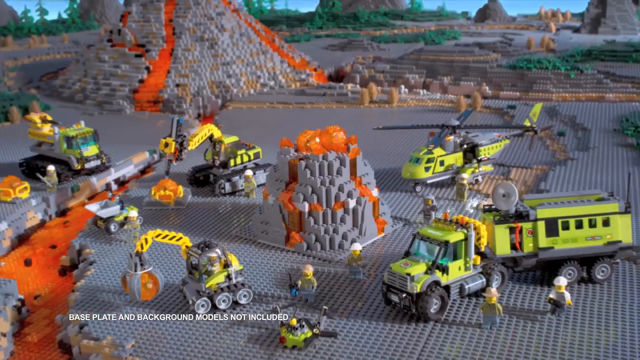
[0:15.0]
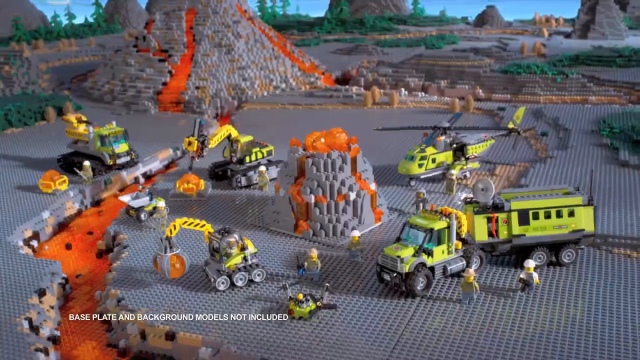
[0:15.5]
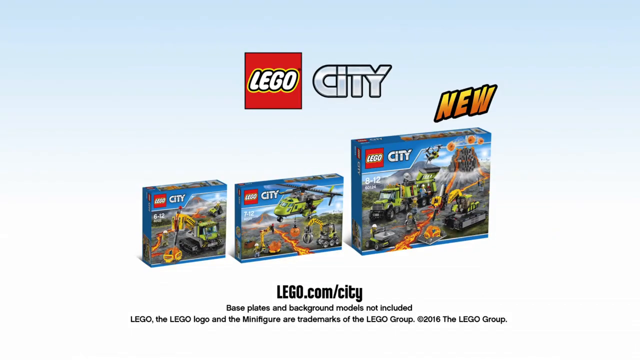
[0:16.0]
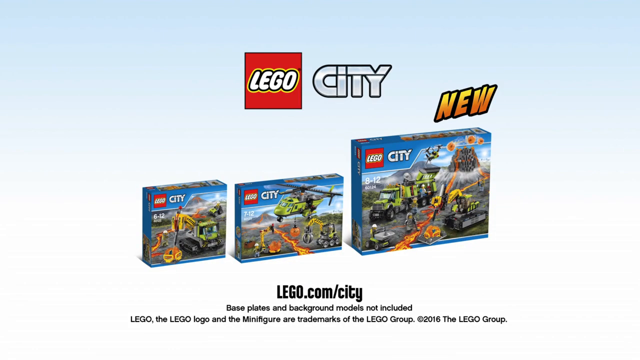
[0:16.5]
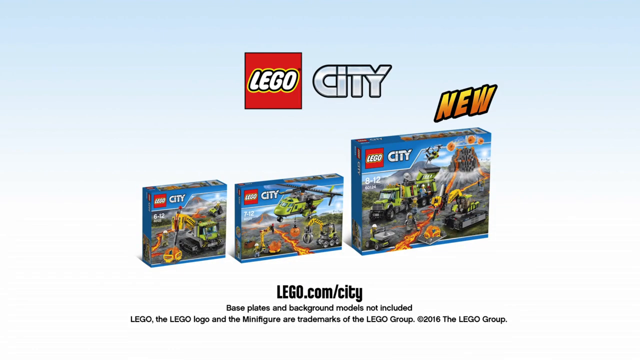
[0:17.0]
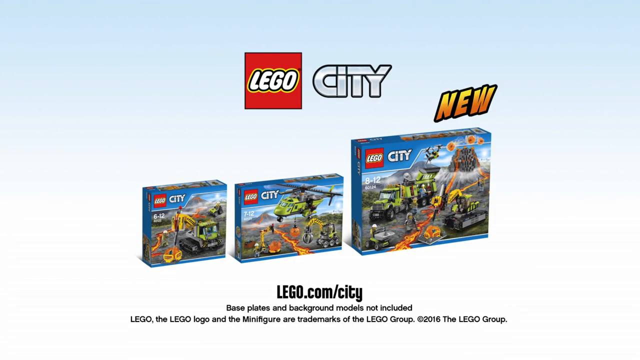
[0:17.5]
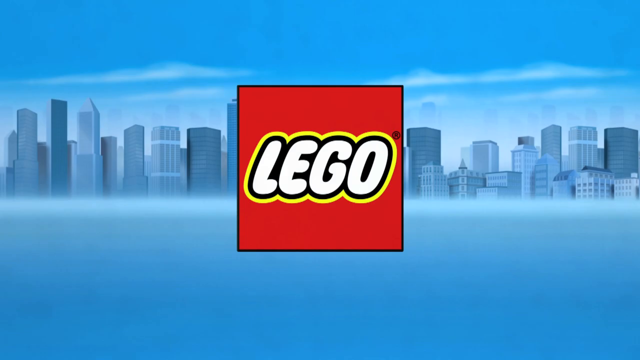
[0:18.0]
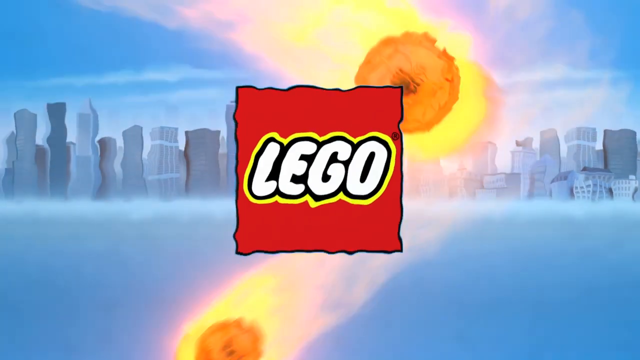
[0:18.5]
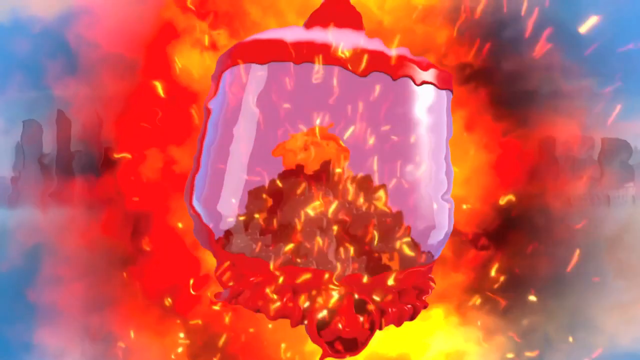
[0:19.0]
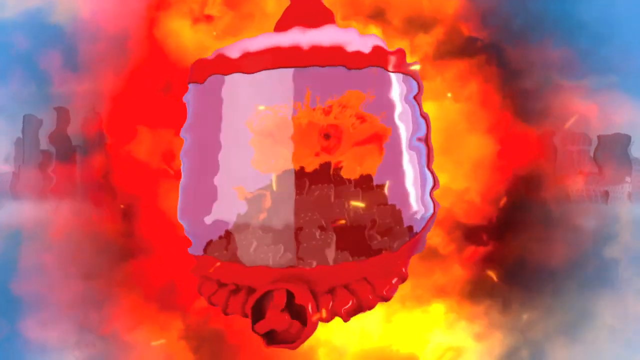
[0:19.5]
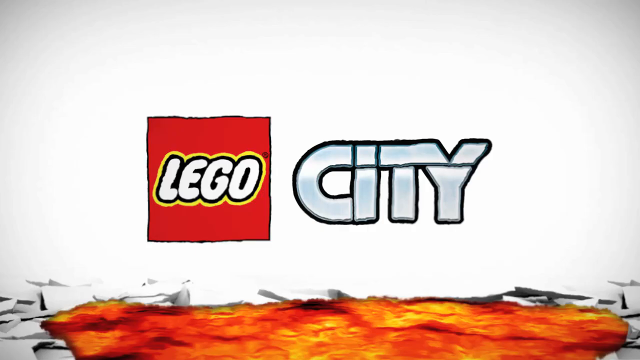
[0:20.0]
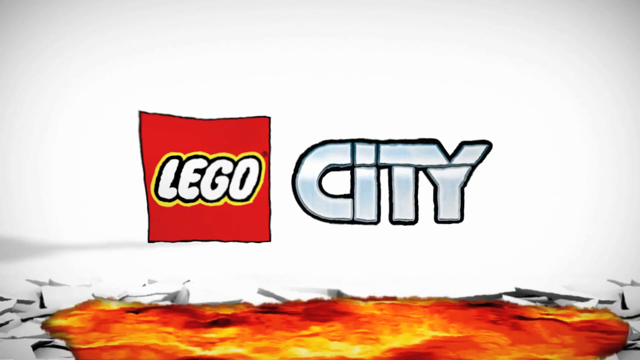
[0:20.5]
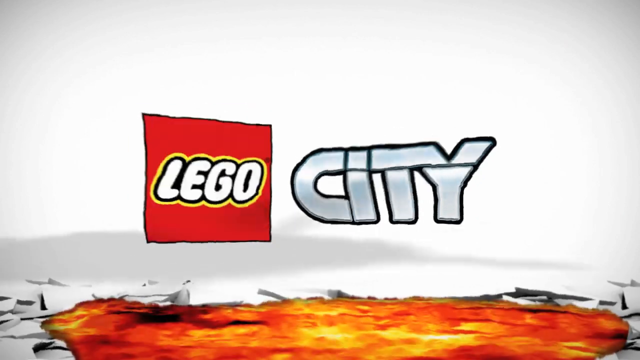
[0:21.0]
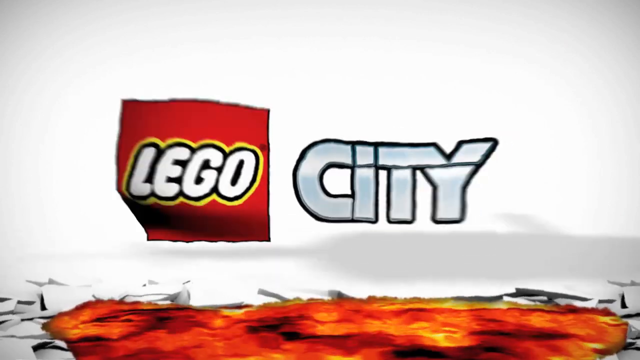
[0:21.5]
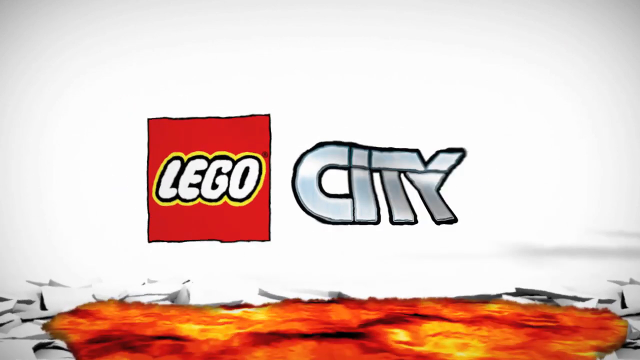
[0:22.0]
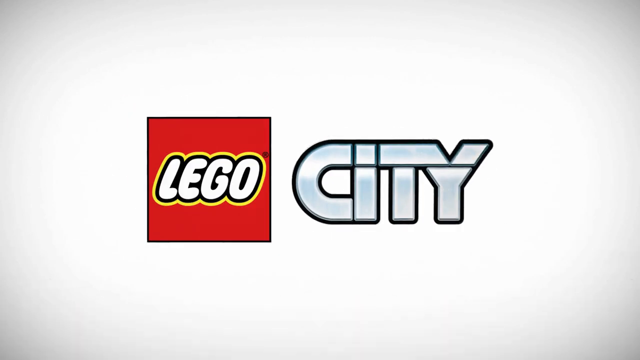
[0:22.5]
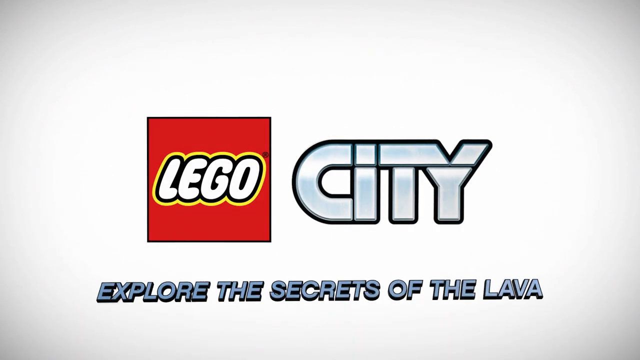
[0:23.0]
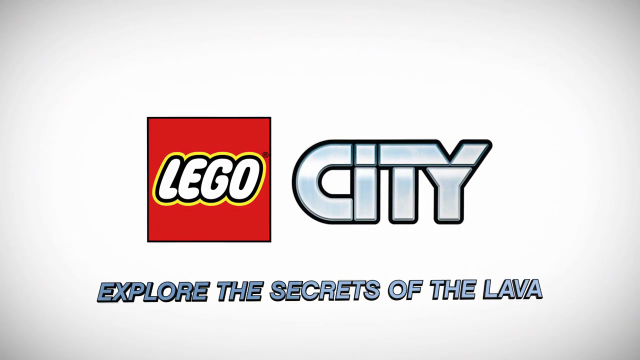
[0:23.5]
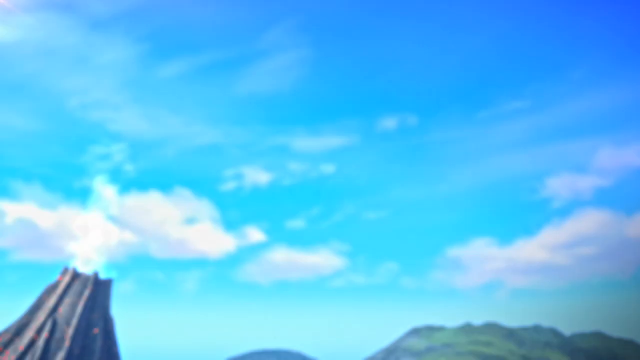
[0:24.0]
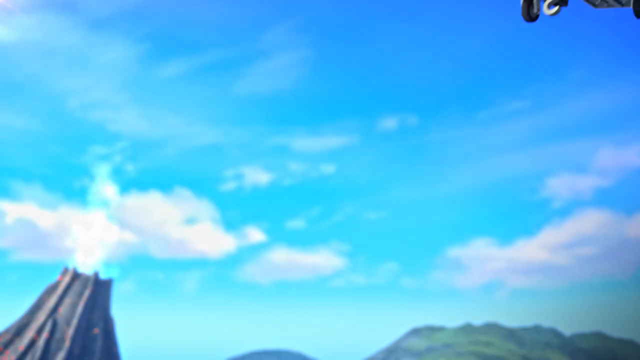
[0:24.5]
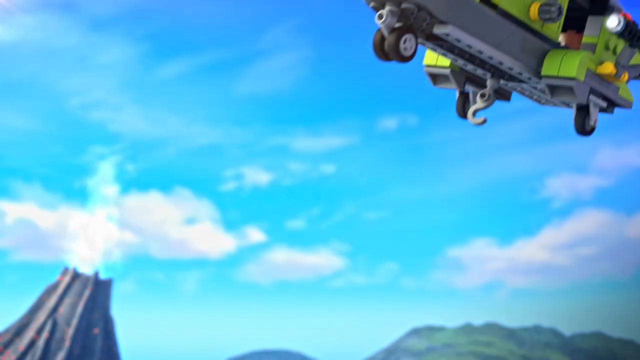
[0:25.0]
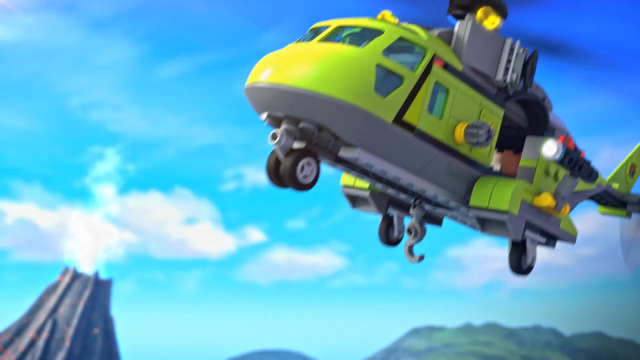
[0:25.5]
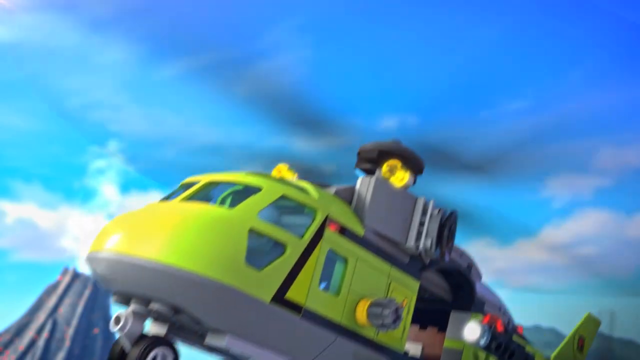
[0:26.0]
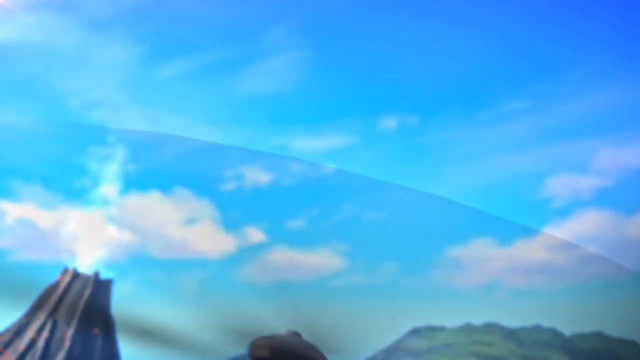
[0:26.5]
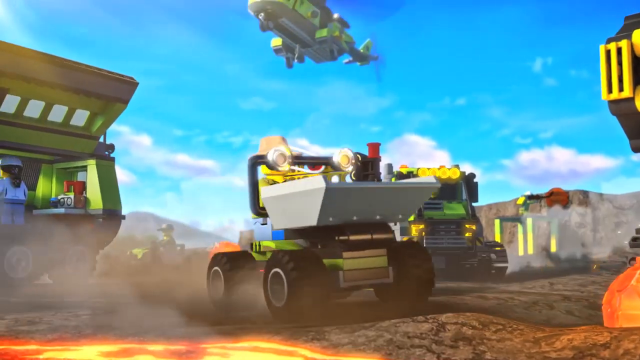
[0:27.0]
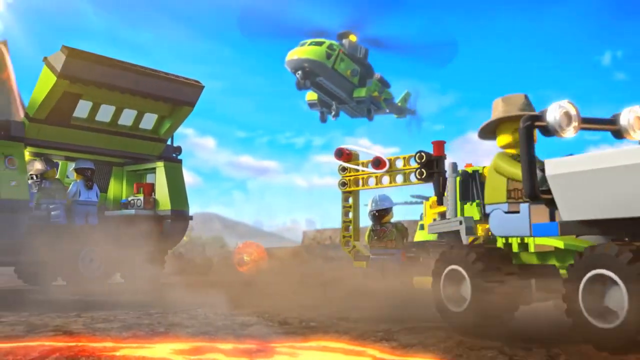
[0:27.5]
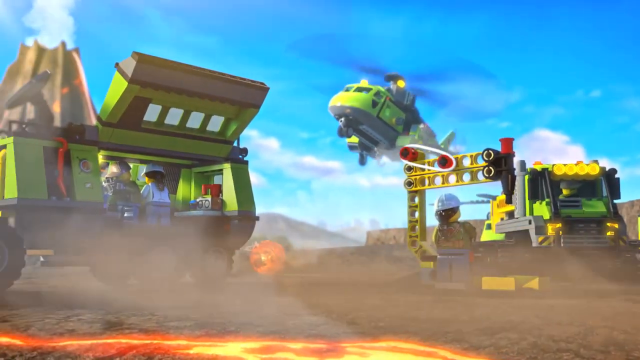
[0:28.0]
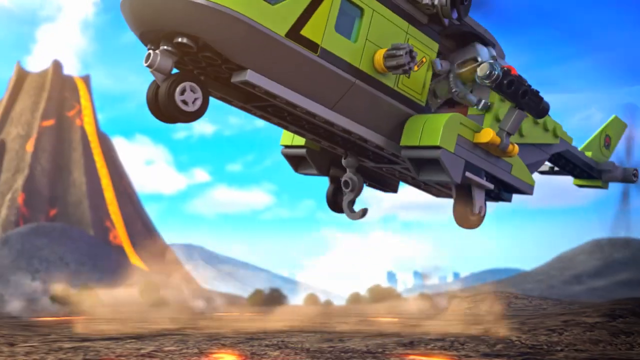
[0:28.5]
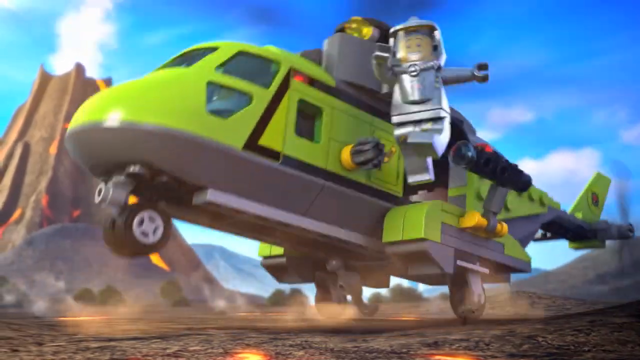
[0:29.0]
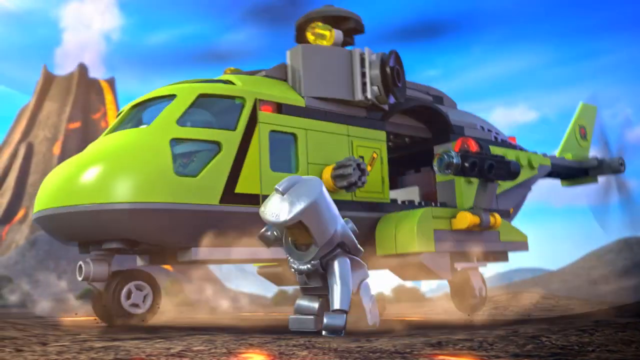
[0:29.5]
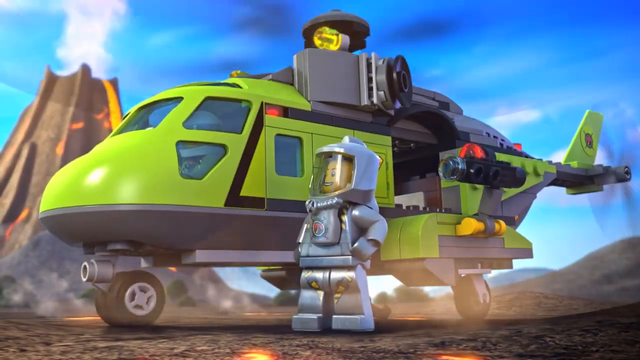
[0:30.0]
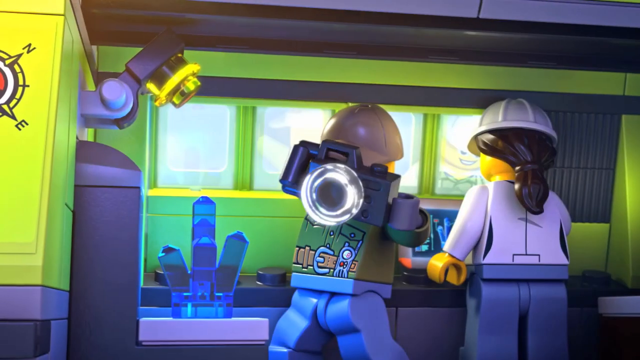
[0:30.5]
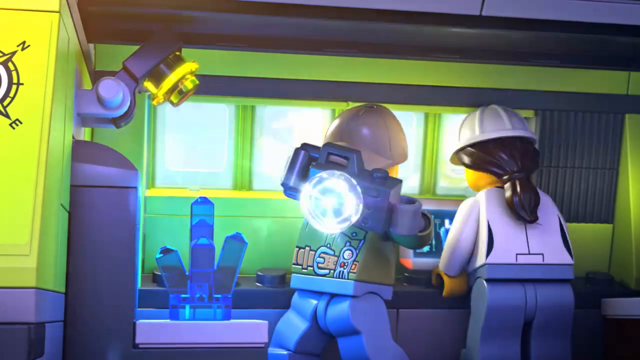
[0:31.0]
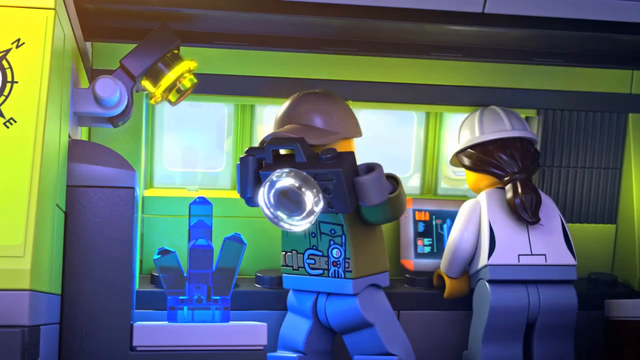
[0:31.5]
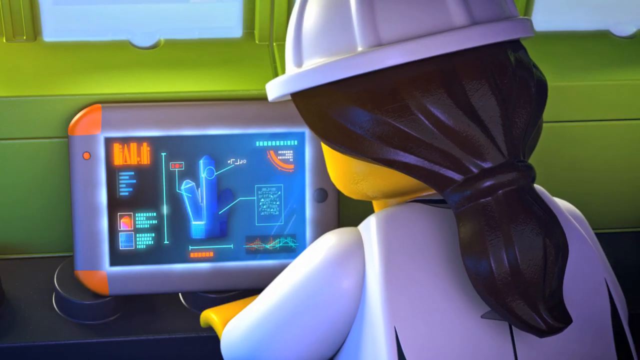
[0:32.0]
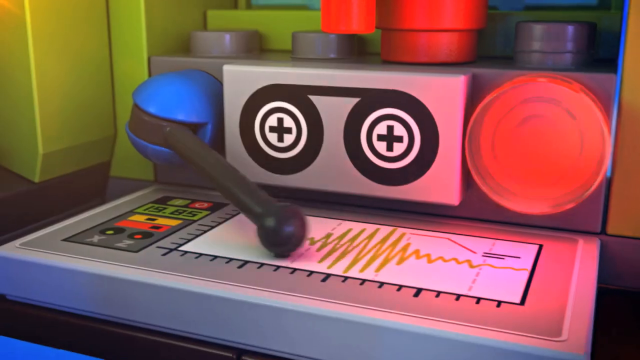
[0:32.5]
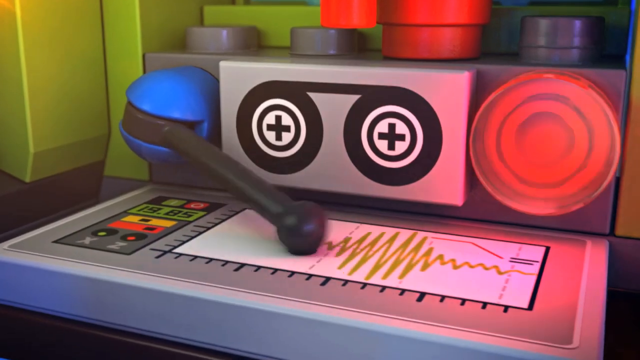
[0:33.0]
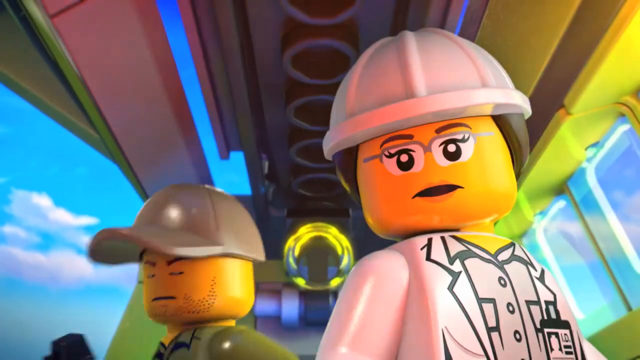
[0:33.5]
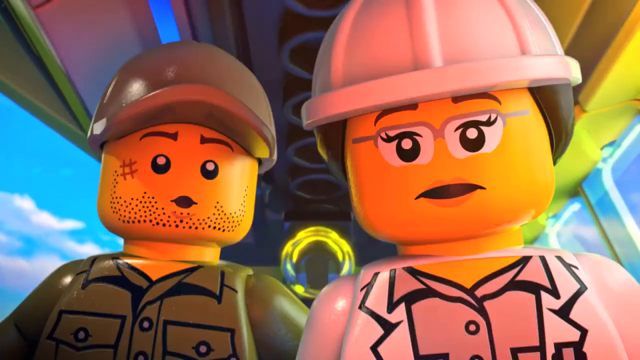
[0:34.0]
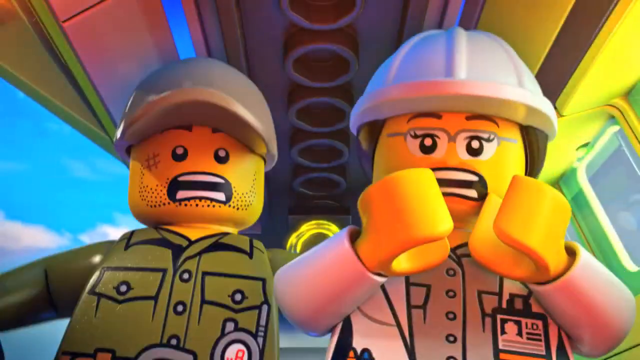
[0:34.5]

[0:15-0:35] On-screen text reads "Lego City explore the secrets of the lava". A helicopter flies into a scene with a large volcano in the background. A little lava flows out of the top of the volcano, creating a river of lava that flows down into other parts of the field. There is a lot of action. A little Lego man in a fireproof suit jumps out of the helicopter. There is a hook on the bottom of the helicopter, and there is some scientific equipment inside one of the vehicles.